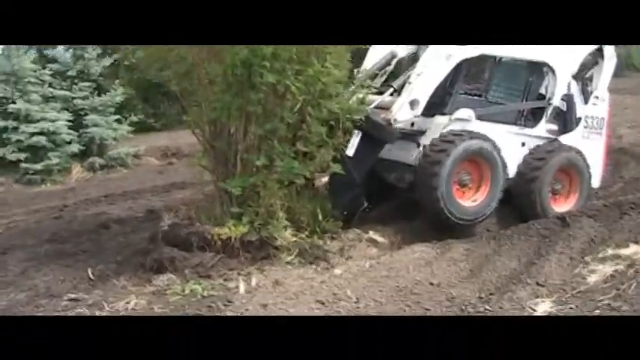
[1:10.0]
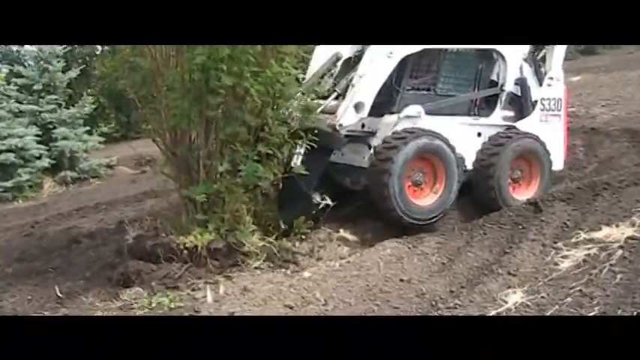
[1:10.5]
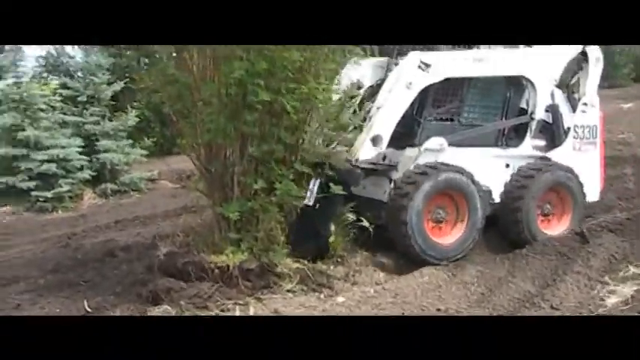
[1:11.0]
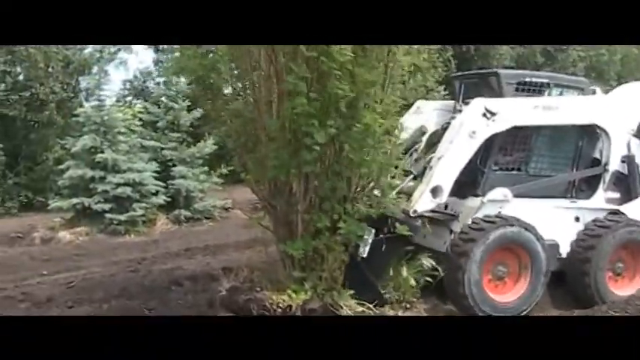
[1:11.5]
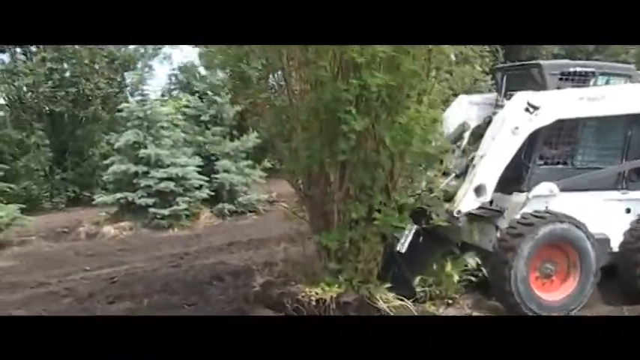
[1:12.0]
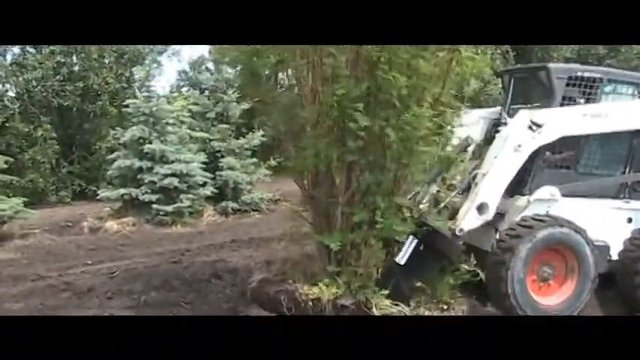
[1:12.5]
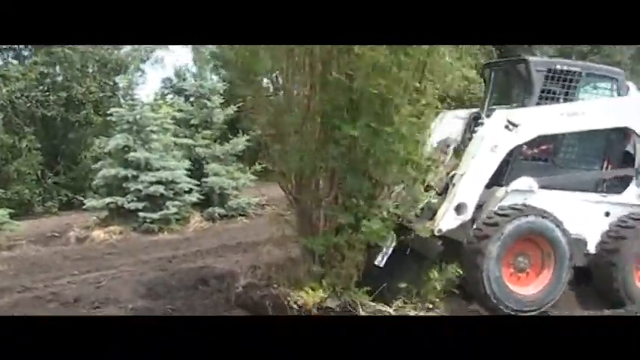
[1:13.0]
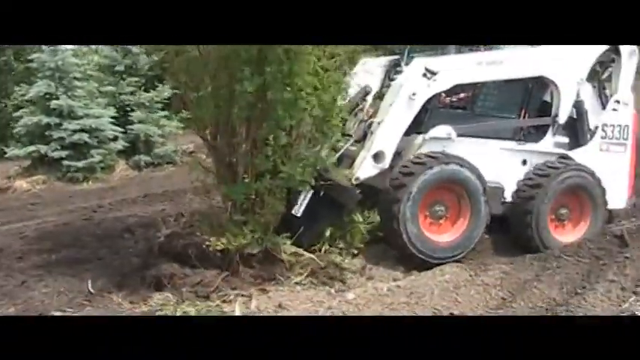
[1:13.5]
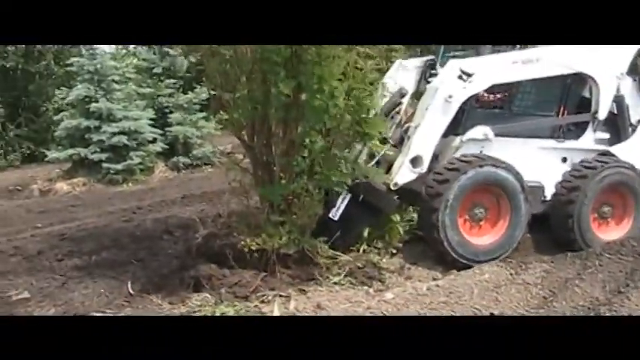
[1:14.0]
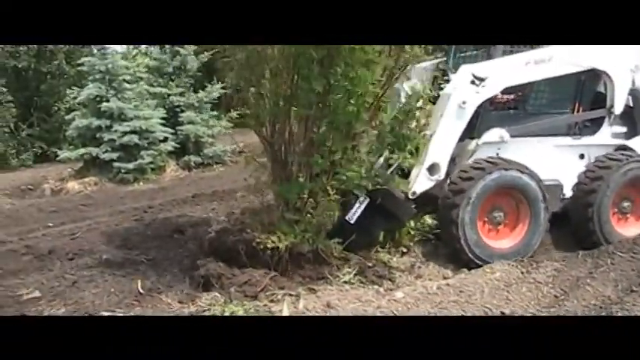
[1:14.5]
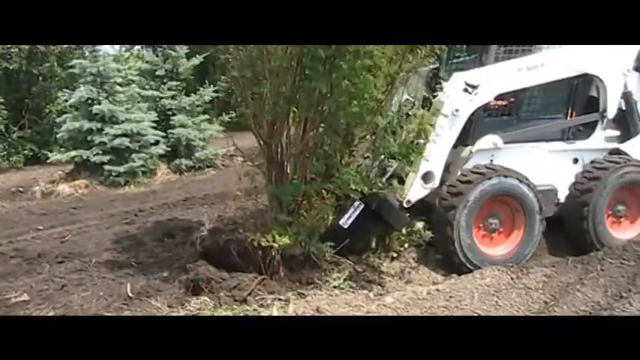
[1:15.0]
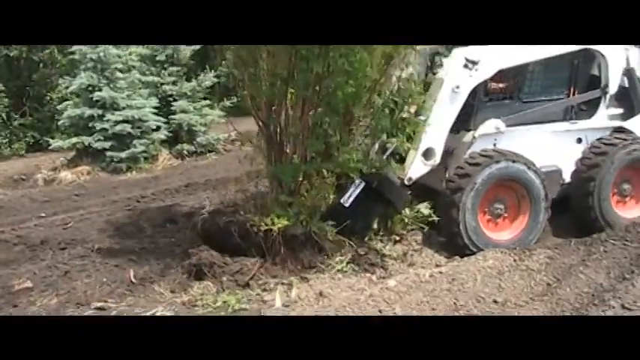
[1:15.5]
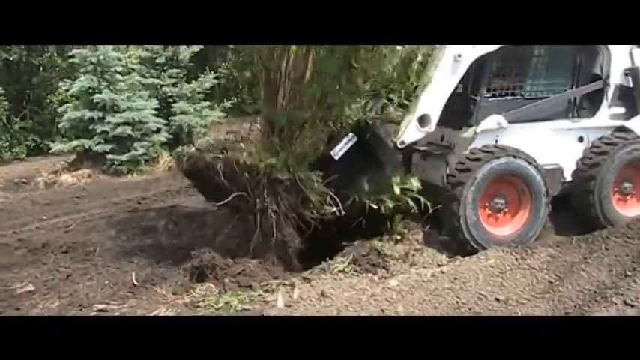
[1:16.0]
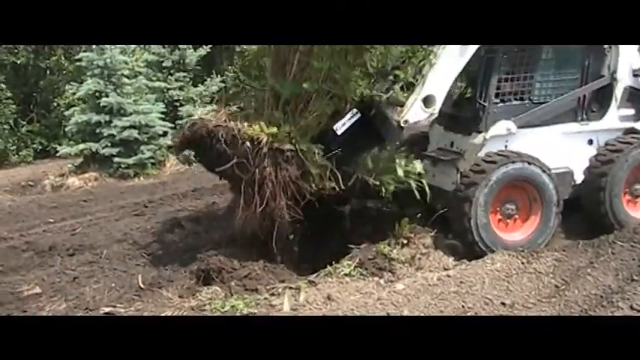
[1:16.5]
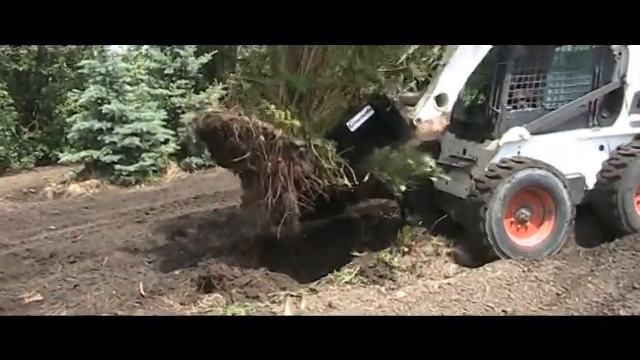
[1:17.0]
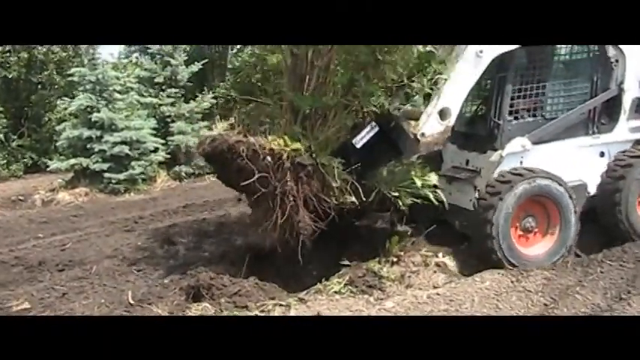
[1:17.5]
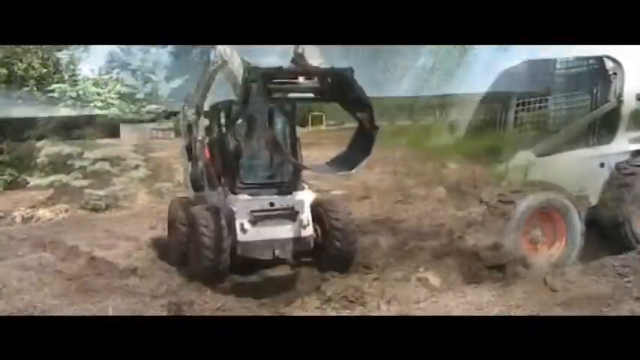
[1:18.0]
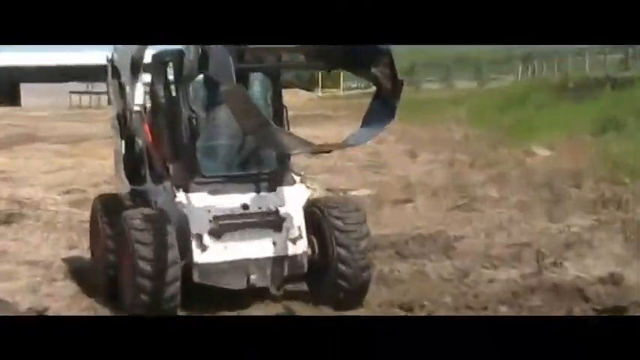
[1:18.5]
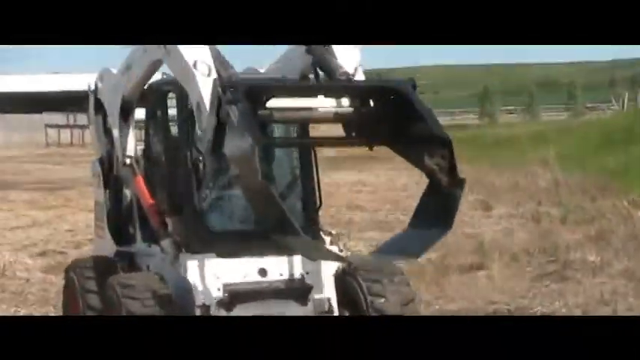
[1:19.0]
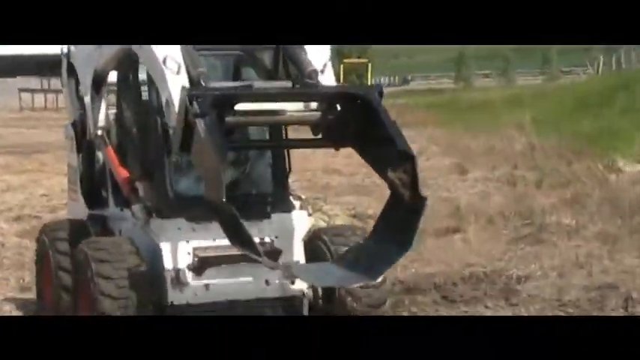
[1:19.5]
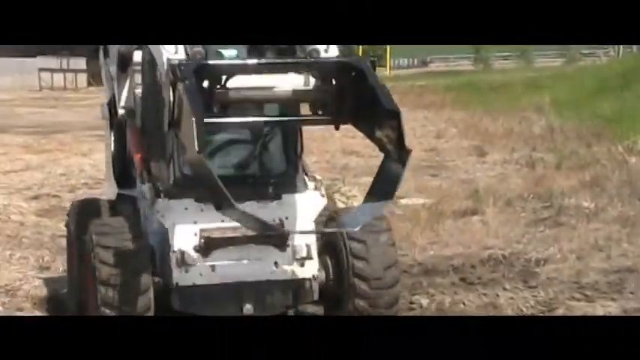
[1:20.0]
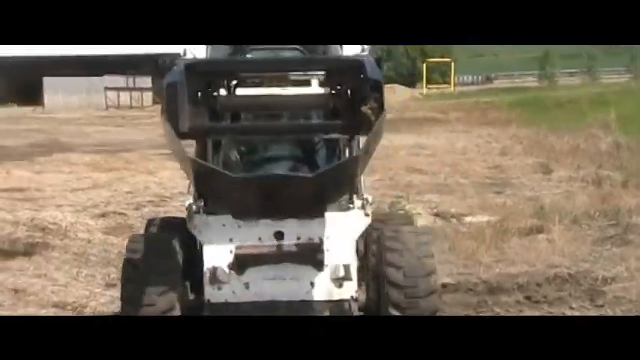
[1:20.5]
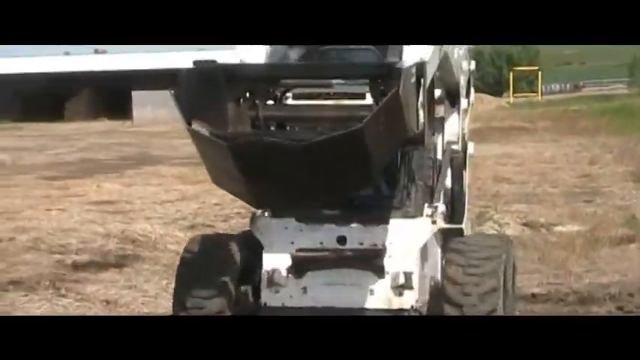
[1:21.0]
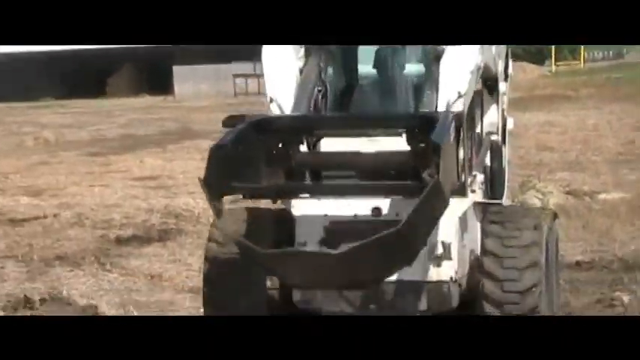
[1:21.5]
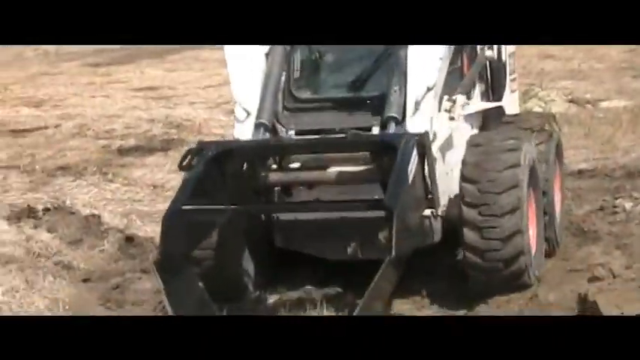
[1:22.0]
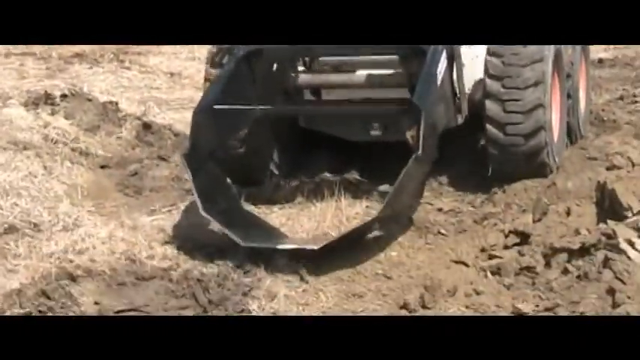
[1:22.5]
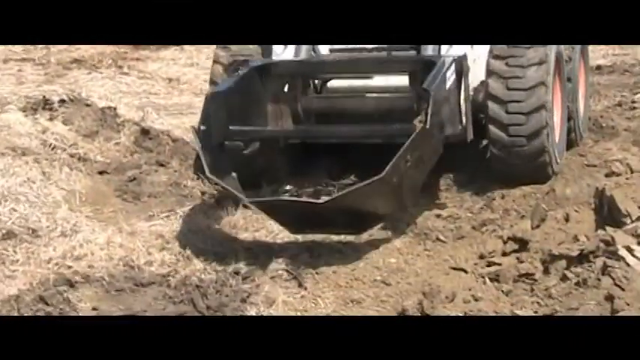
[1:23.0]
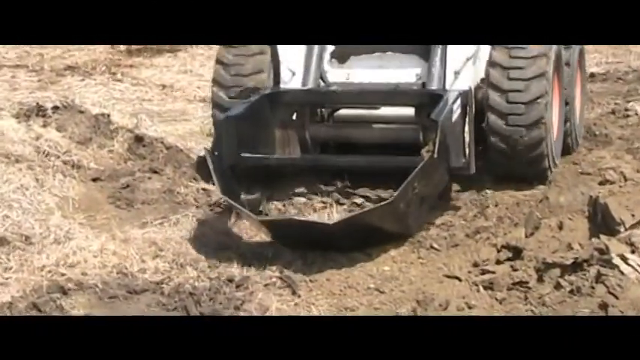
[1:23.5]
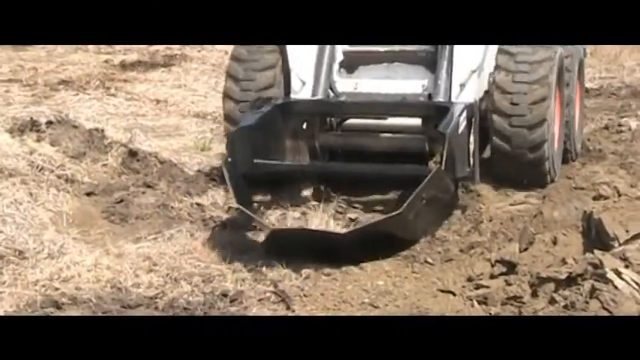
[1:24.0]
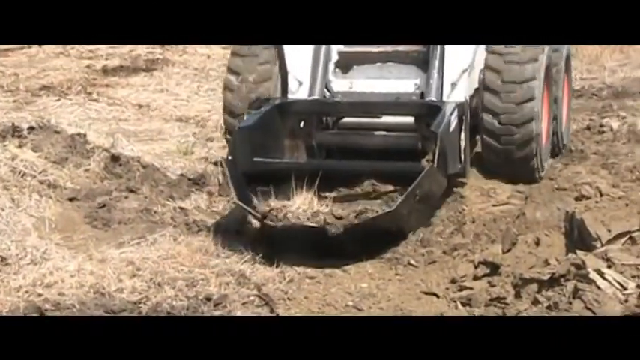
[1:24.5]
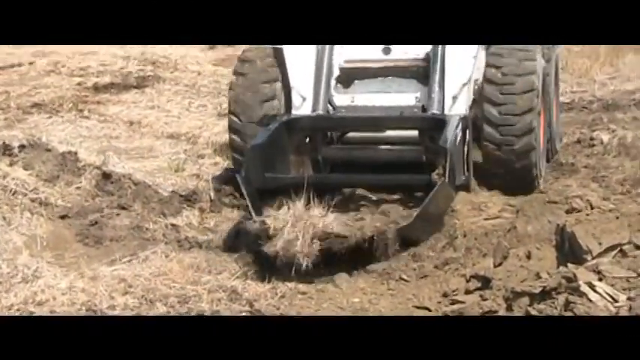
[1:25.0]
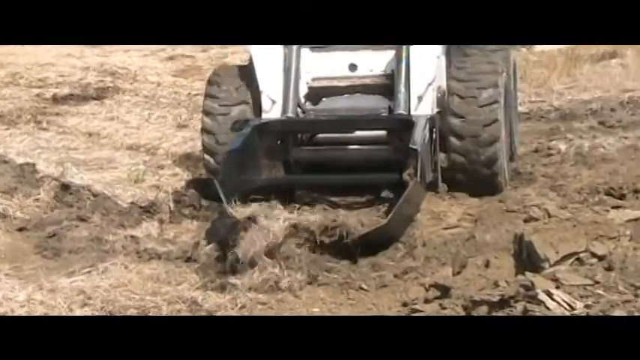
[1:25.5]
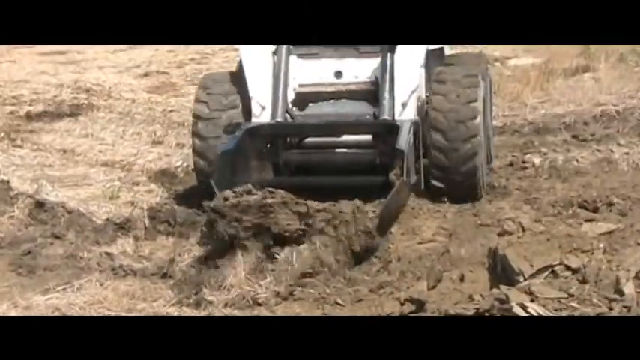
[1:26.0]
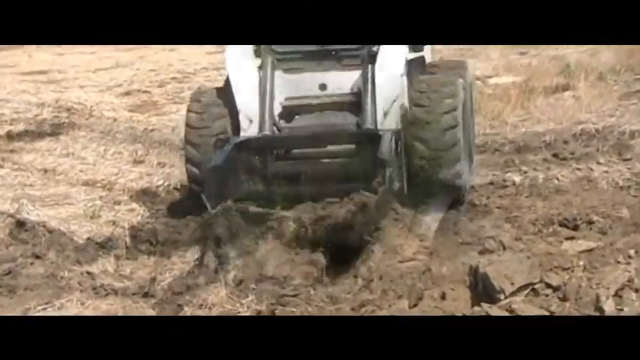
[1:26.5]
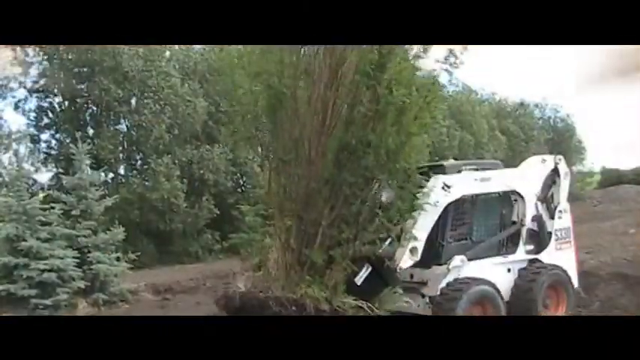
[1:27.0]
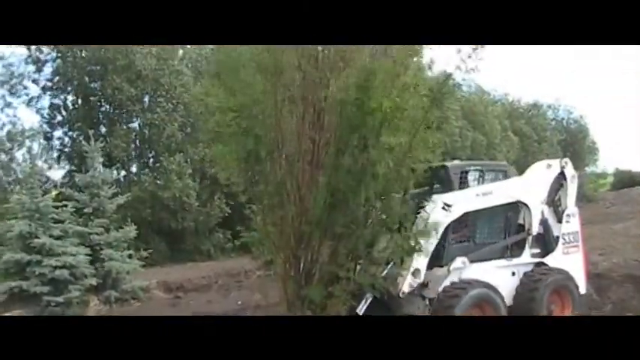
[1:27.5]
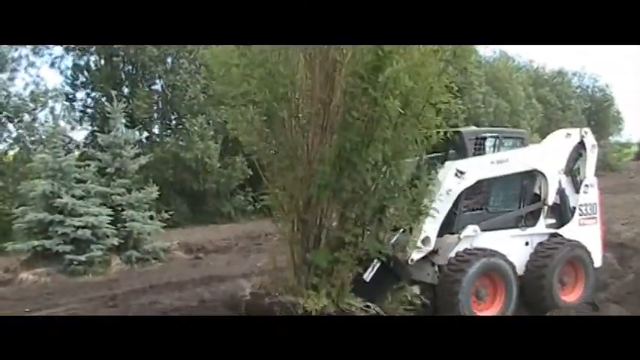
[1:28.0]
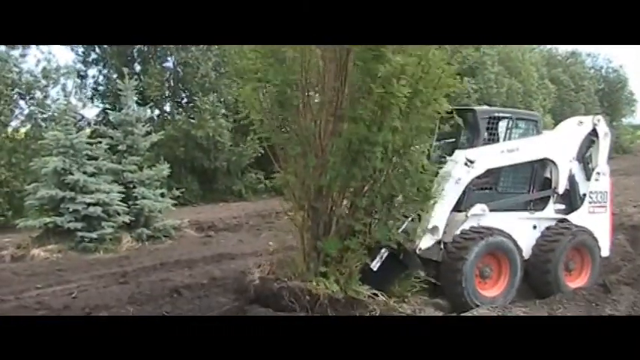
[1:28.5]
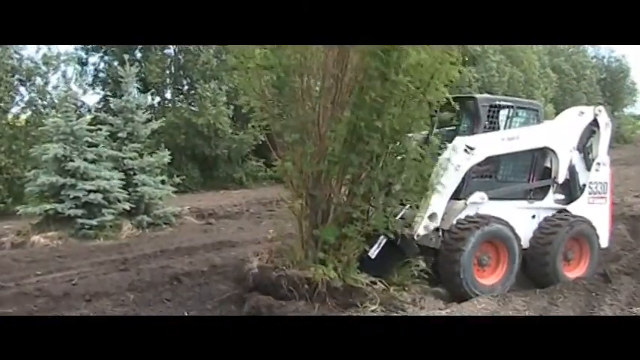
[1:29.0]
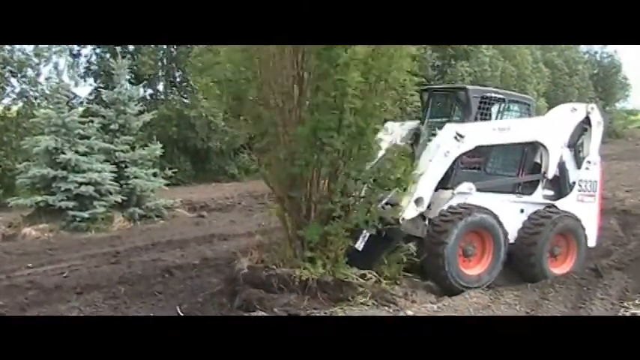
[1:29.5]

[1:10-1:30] The white machinery, a piece of heavy machinery with kind of big tires and orange inner rims, drives toward a tree and kind of pries with the front. It picks the tree up, starts to back up and moves with it. In another scene the scoop, called the tree shovel, is empty and goes against the ground, cutting through the dirt. The machine is then used to put down a tree; it looks like it is starting to plant it. It drives over with the tree, the root system visible in the shovel, drives up to a hole and puts the tree down in the hole.